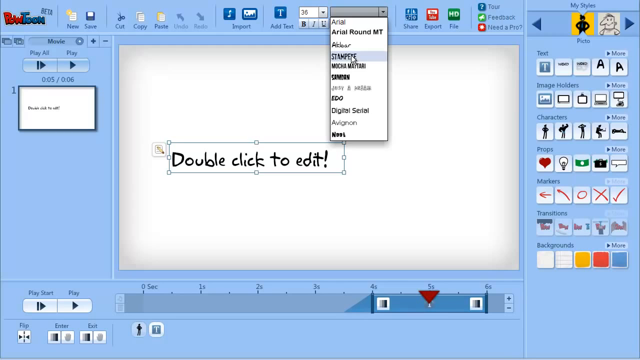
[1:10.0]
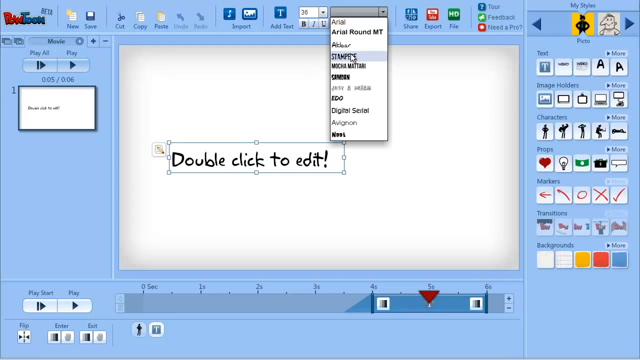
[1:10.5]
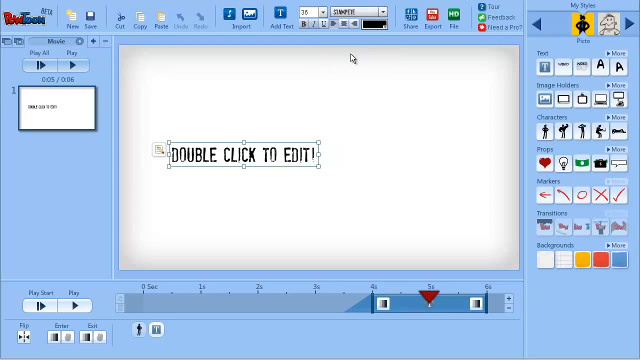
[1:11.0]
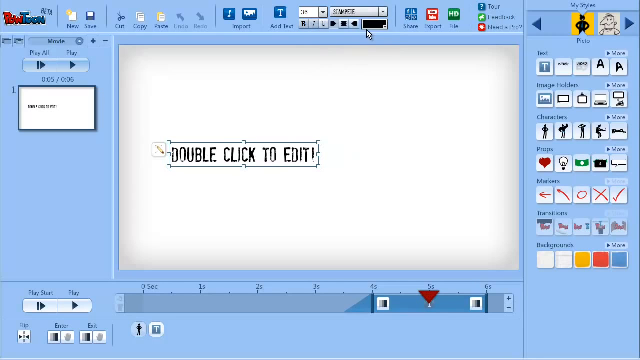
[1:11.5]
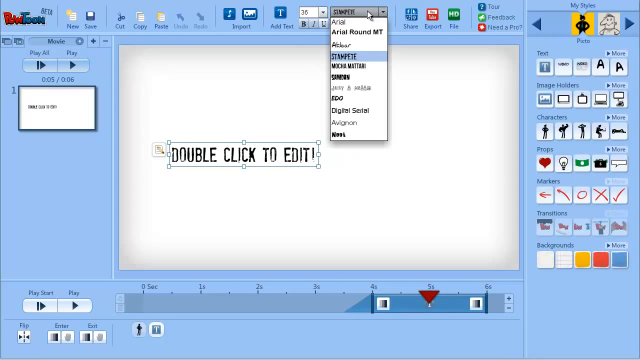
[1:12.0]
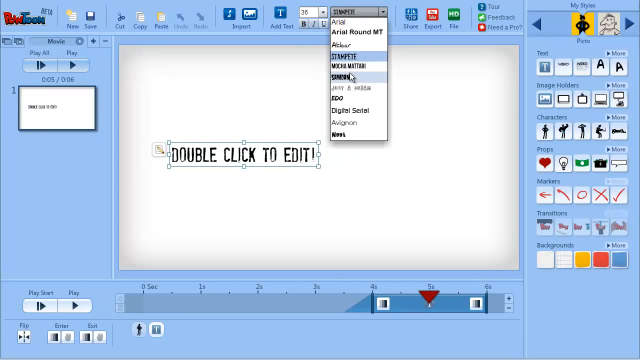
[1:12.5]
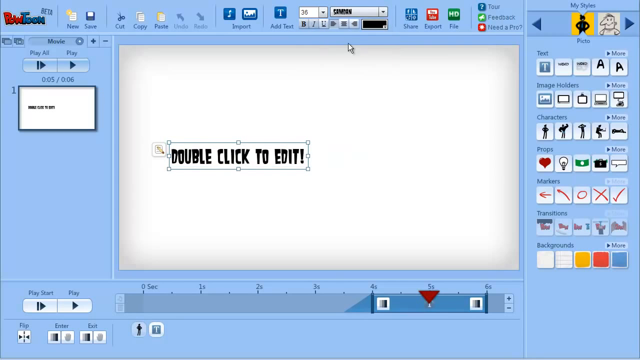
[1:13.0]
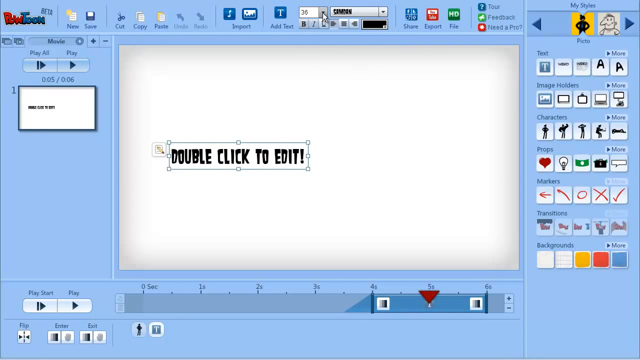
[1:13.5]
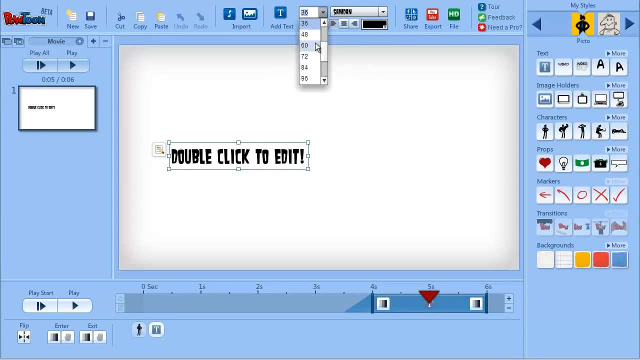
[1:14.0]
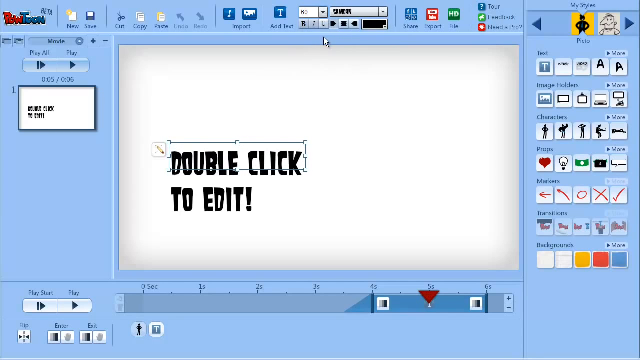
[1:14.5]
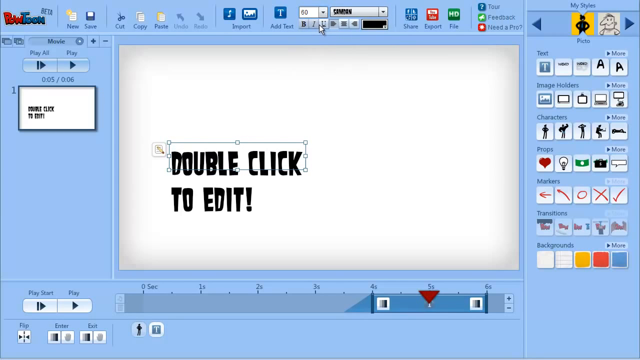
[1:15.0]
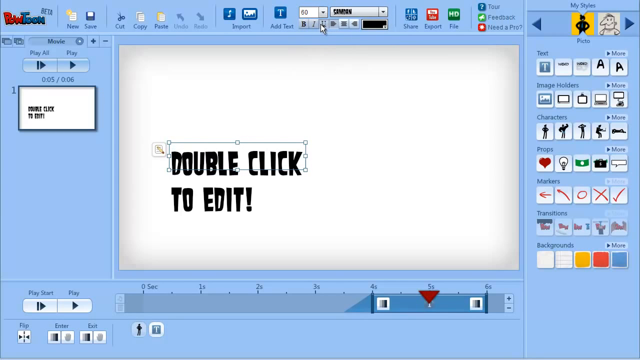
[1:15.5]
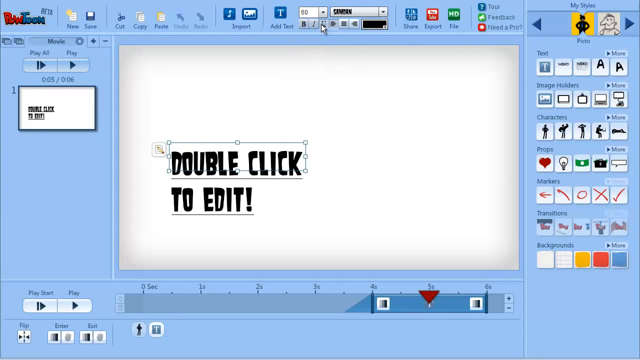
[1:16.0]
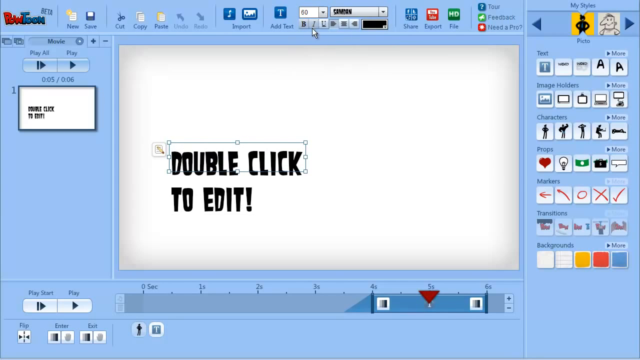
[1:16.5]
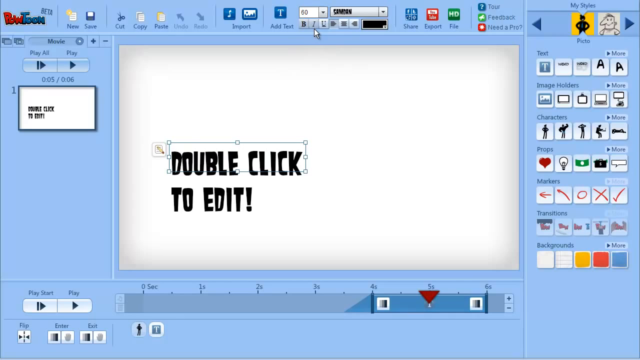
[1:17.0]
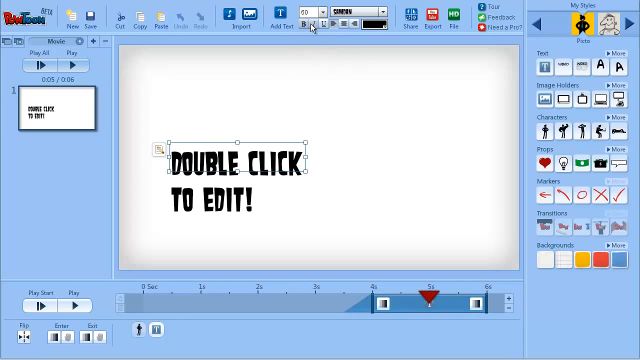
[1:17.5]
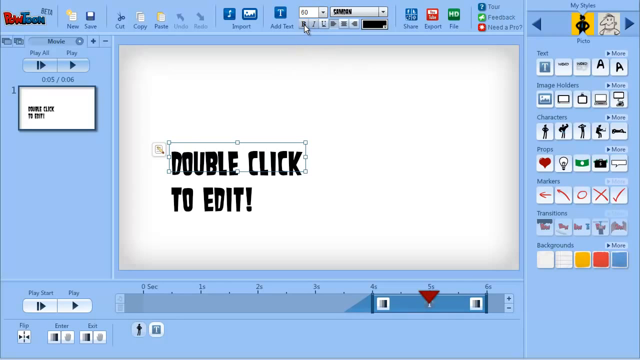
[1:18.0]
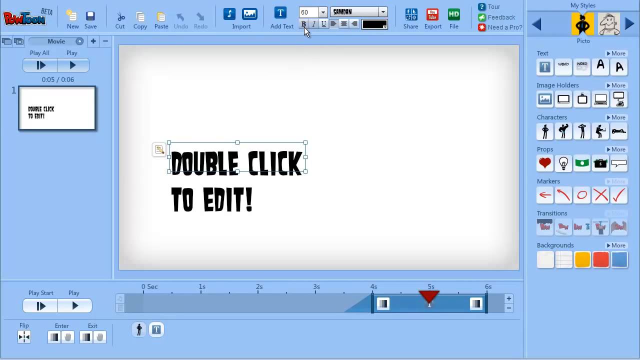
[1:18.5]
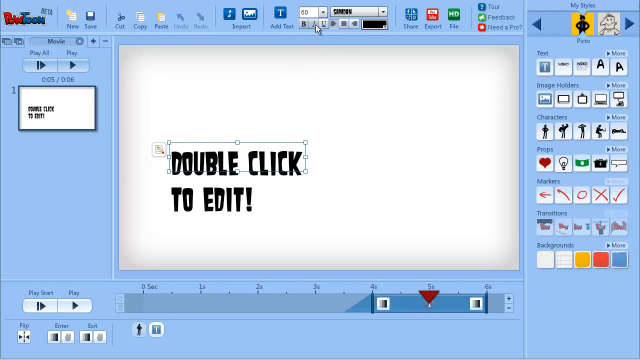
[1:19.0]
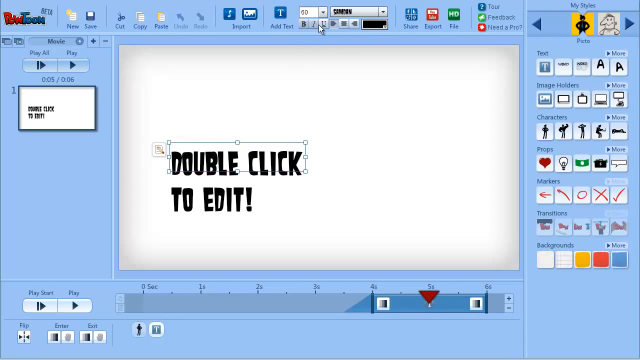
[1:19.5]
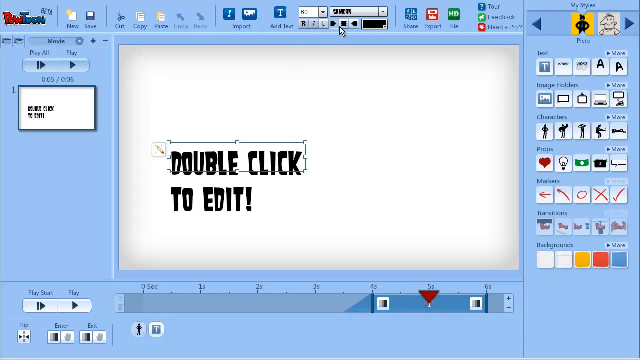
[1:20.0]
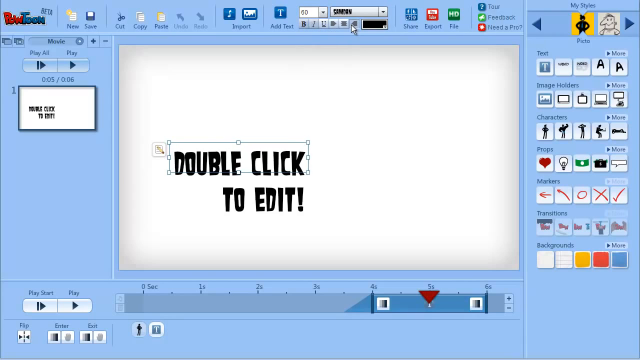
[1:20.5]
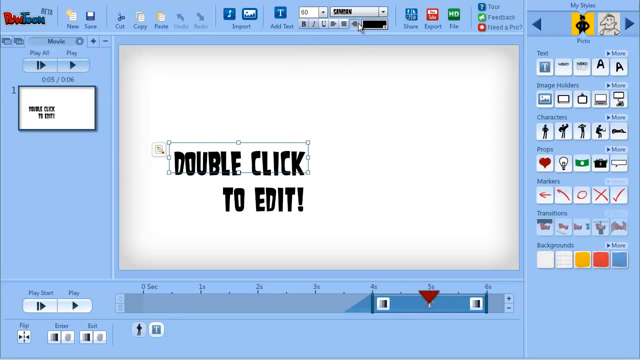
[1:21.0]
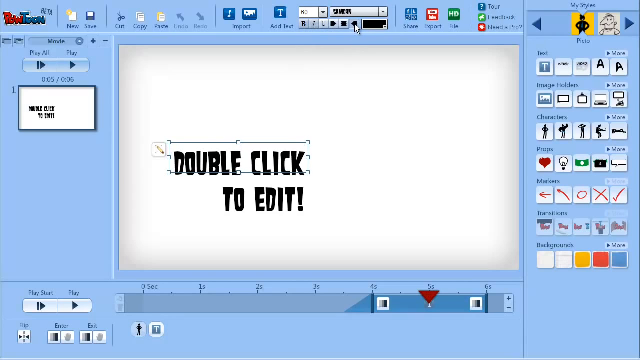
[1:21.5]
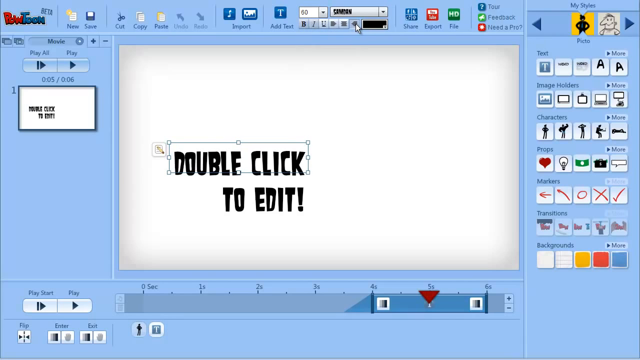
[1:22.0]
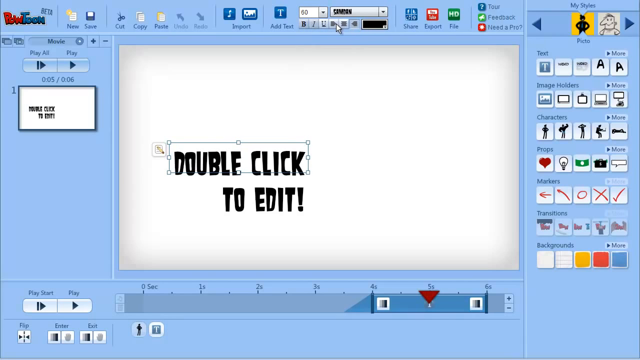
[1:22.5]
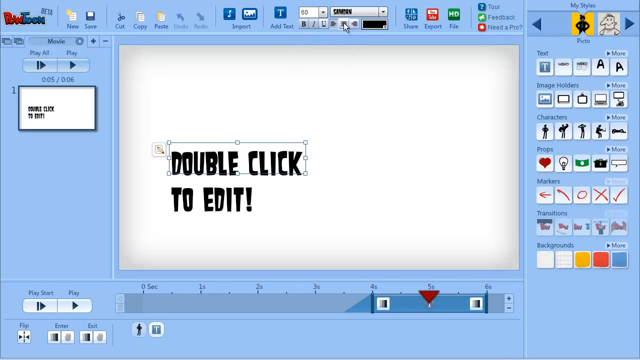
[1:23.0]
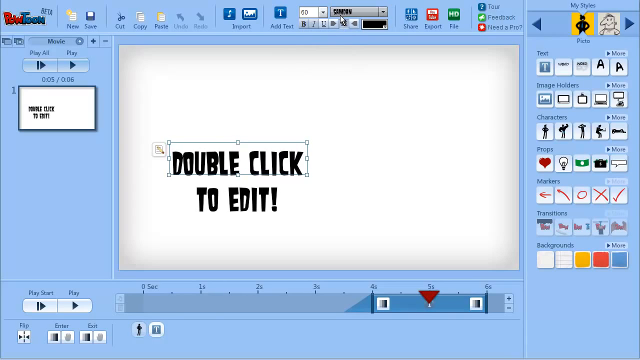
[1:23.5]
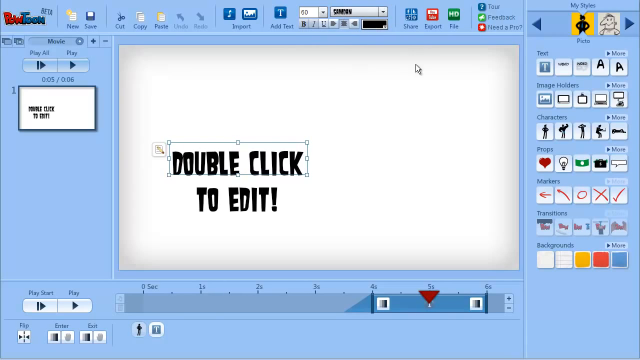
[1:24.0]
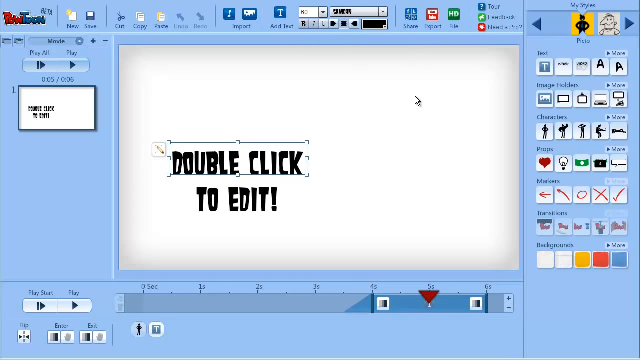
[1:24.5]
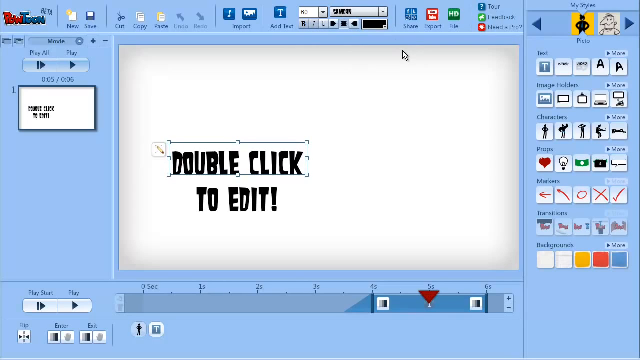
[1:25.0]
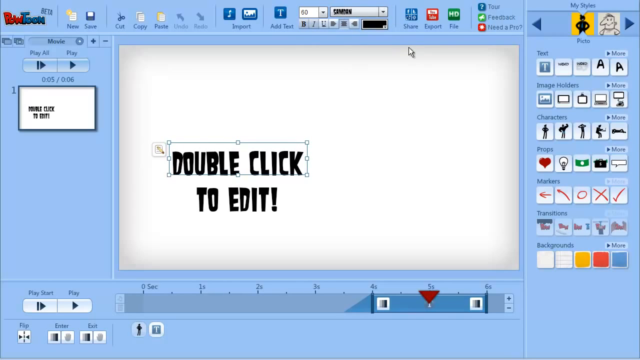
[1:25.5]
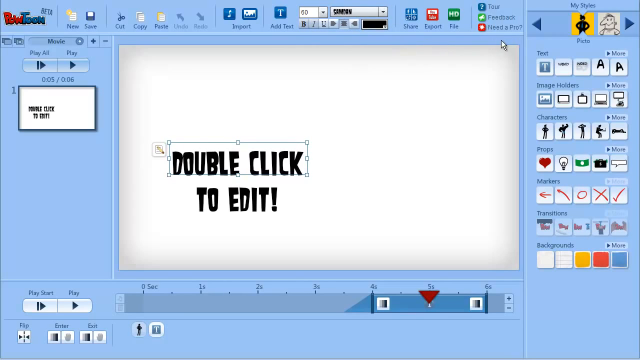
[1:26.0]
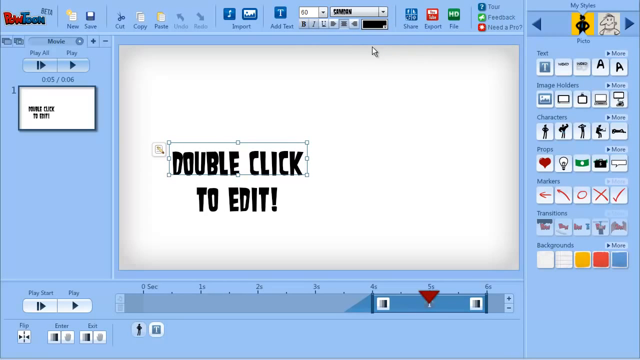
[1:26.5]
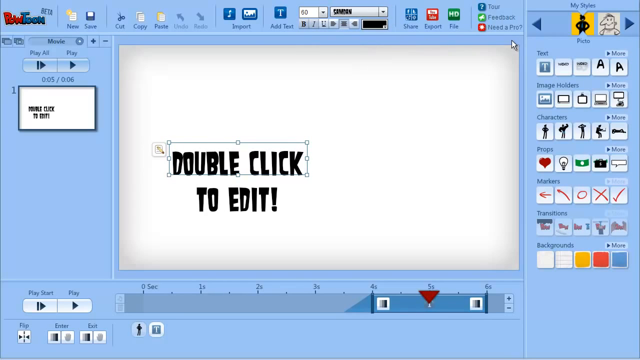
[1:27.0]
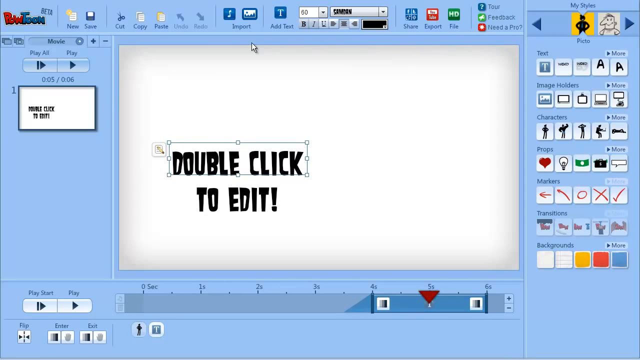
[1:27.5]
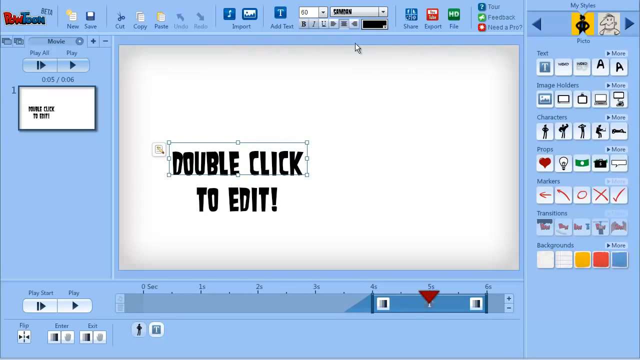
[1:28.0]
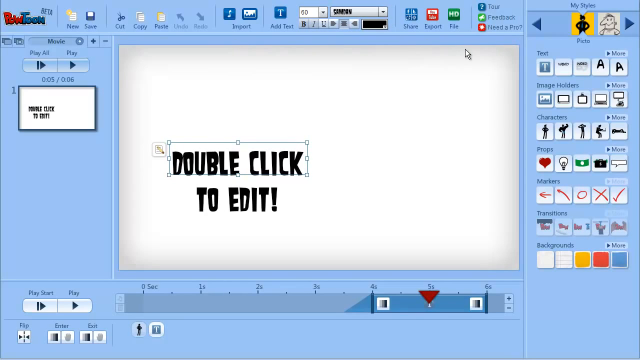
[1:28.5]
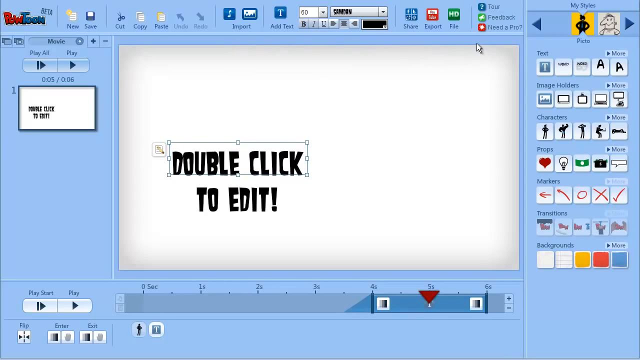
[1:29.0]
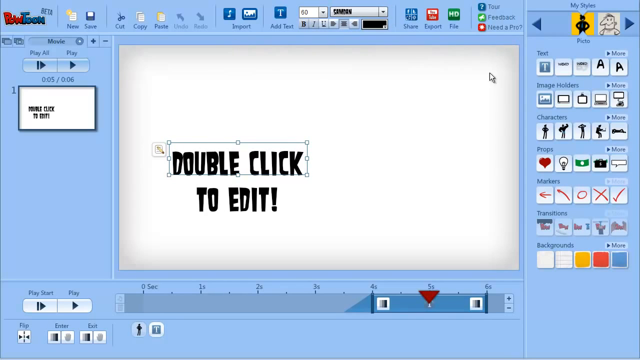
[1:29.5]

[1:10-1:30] The mouse scrolls around the screen over the baby blue background of the editing software, with the shape-altering tabs on the right-hand side and text and other editing features along the top. The stick figure with the jack-in-the-box head, tuft of hair and blue necktie is still shown. A drop-down menu appears and a choice is apparently made. The mouse hovers around the top taskbar over the tabs and features without clicking anything, until it clicks the "double click to edit" box, apparently a text box. Toward the end, the text is edited into thick letters: the font is changed three different times and ends up very thick, probably five times the original thickness.